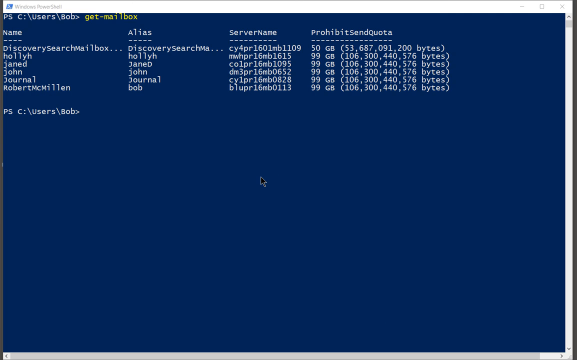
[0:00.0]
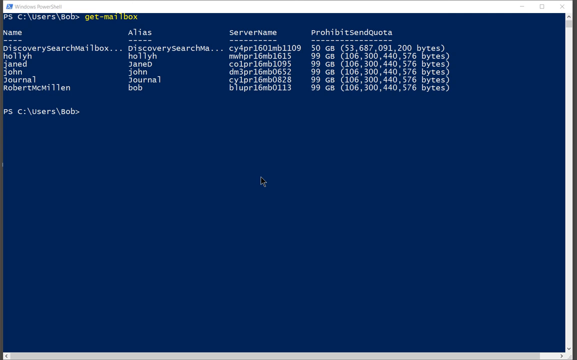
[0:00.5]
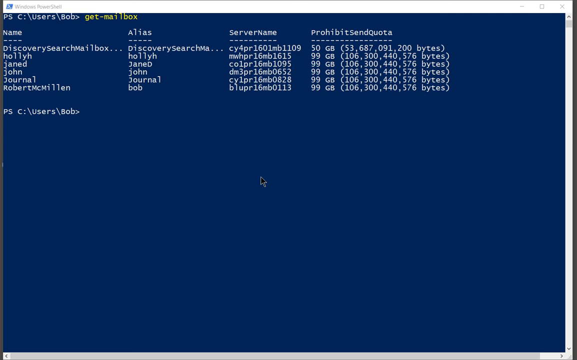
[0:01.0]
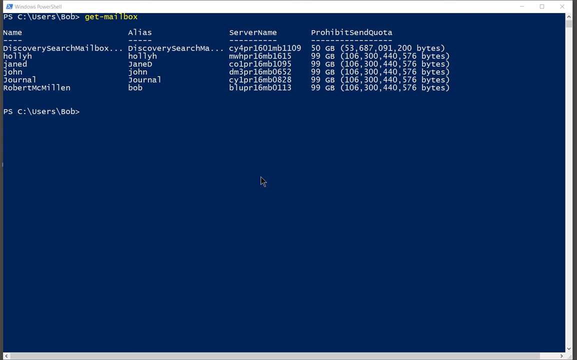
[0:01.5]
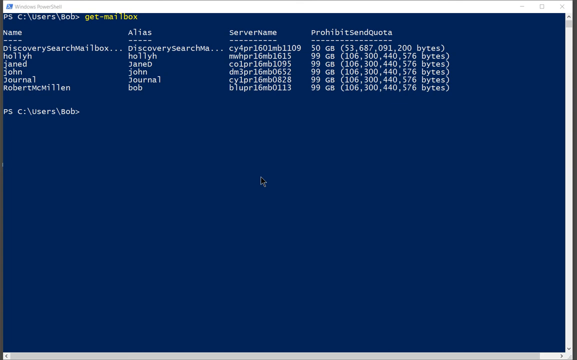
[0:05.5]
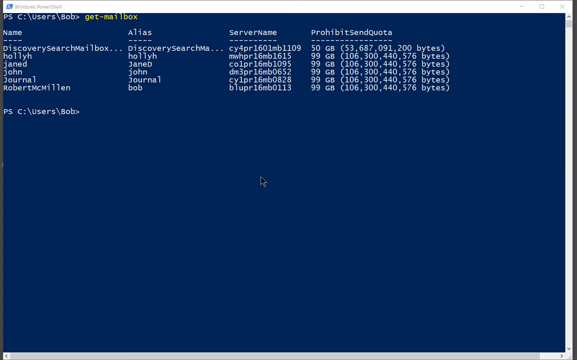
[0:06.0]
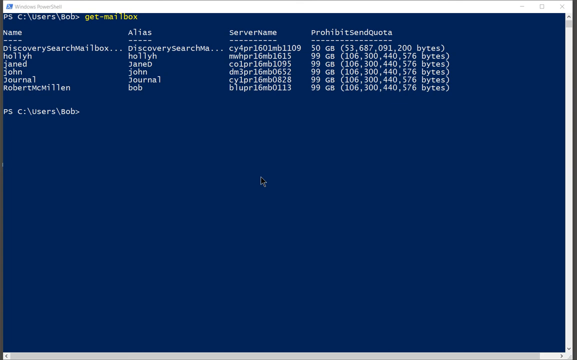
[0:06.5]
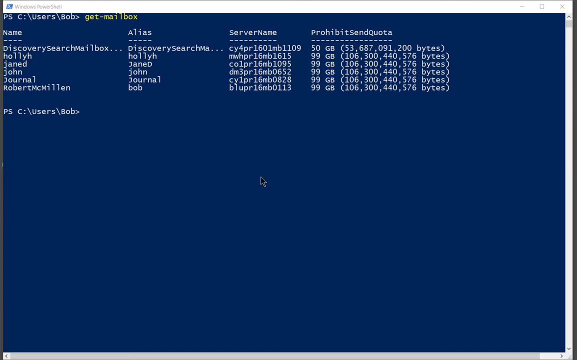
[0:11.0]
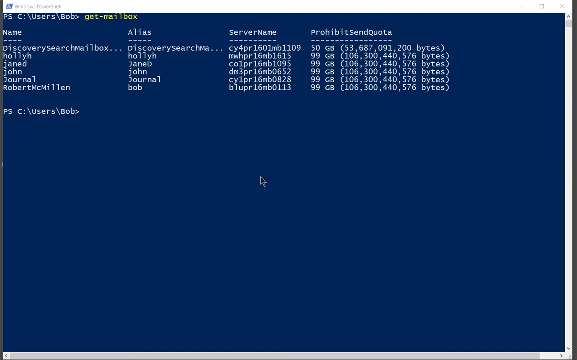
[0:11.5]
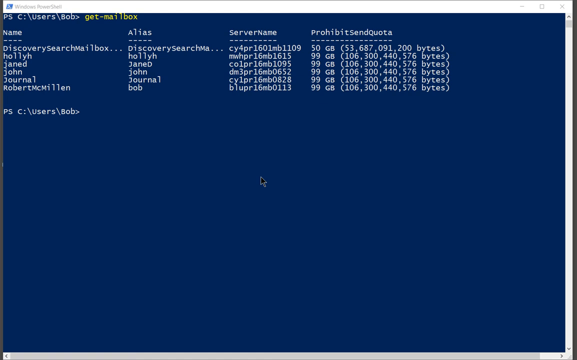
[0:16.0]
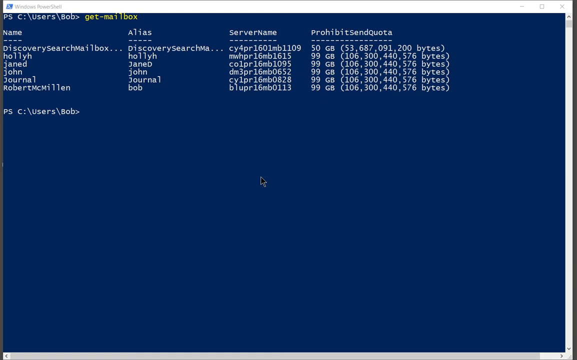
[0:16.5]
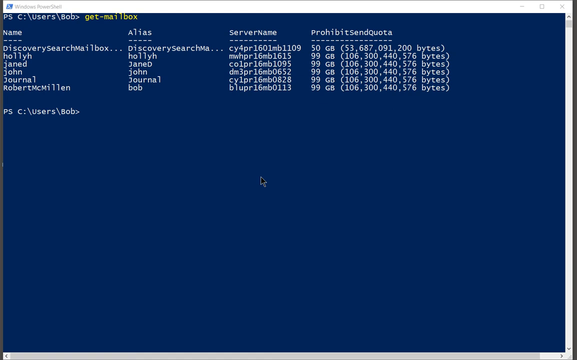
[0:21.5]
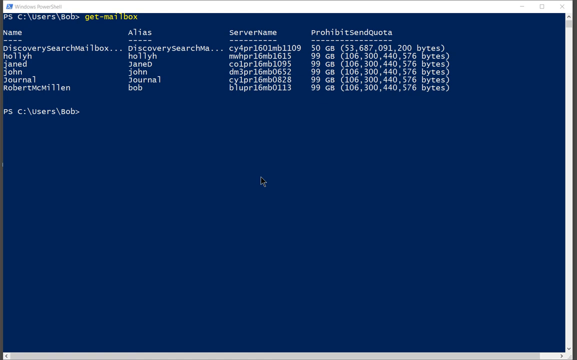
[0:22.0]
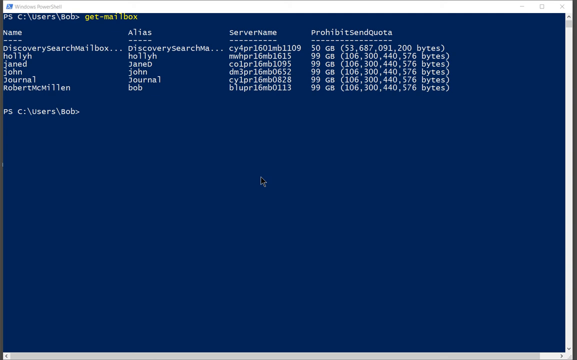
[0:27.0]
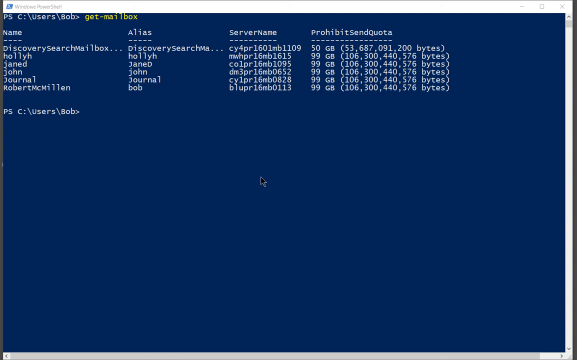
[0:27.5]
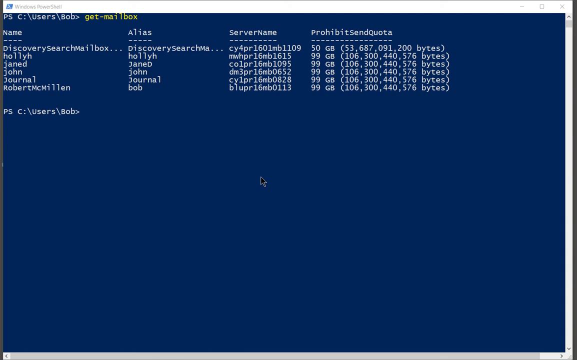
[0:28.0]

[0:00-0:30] Code is shown on screen, with numbers and bytes visible. The screen is blue and the text is written in white, with some parts highlighted in yellow.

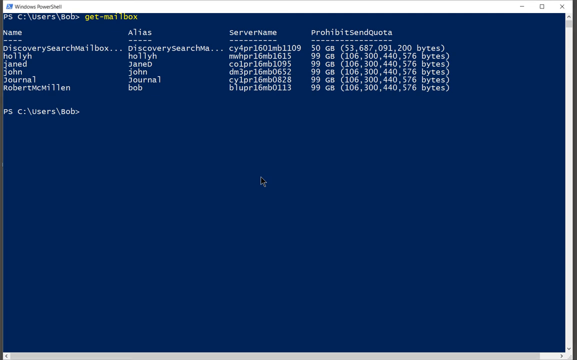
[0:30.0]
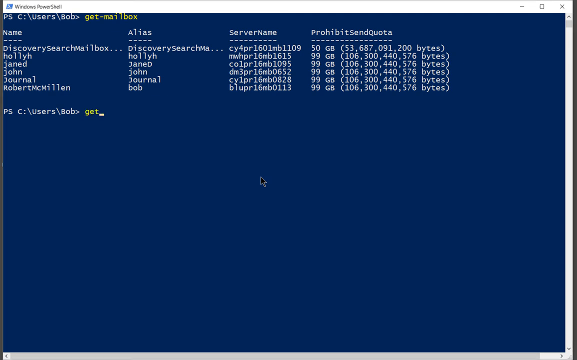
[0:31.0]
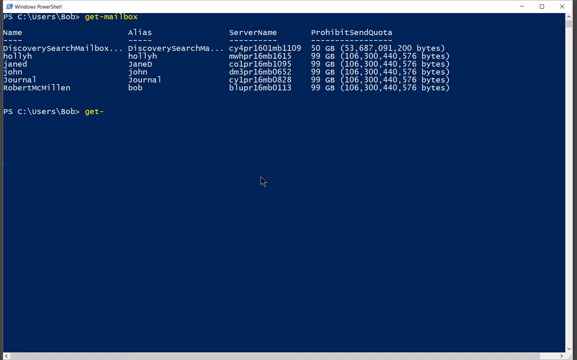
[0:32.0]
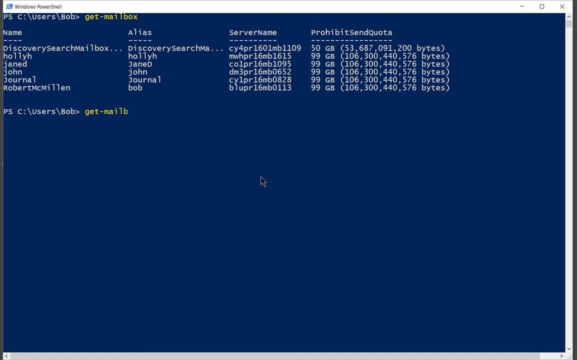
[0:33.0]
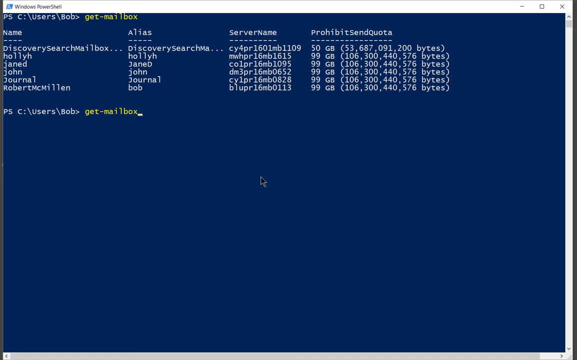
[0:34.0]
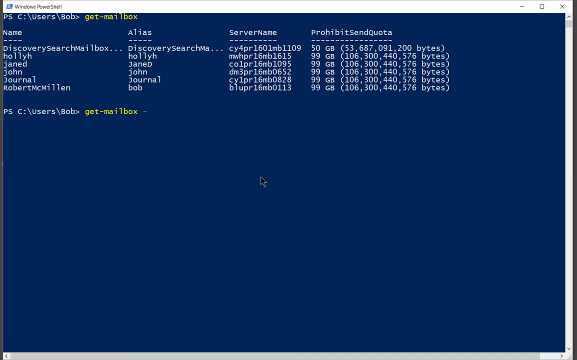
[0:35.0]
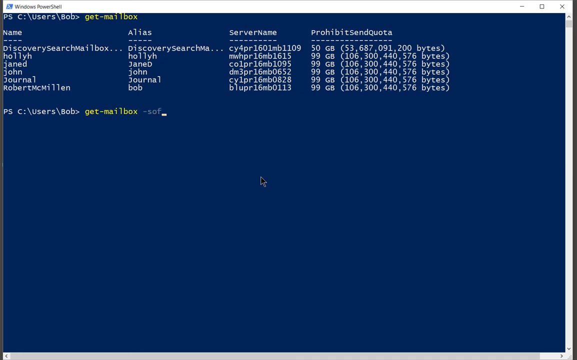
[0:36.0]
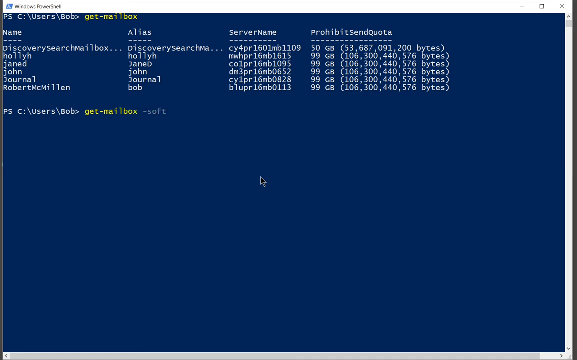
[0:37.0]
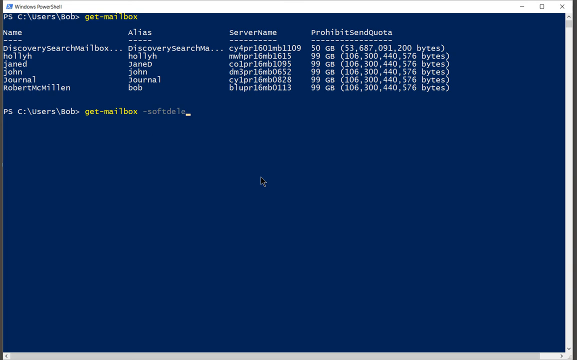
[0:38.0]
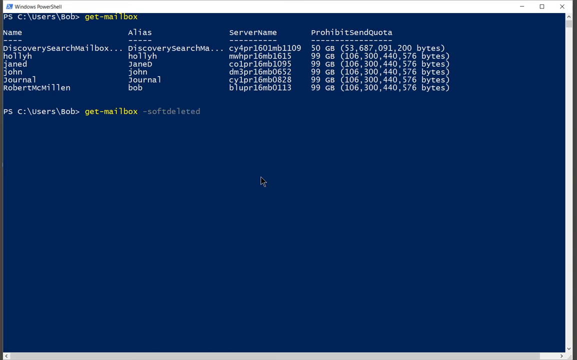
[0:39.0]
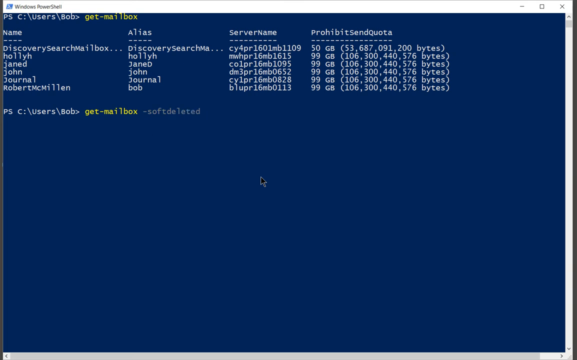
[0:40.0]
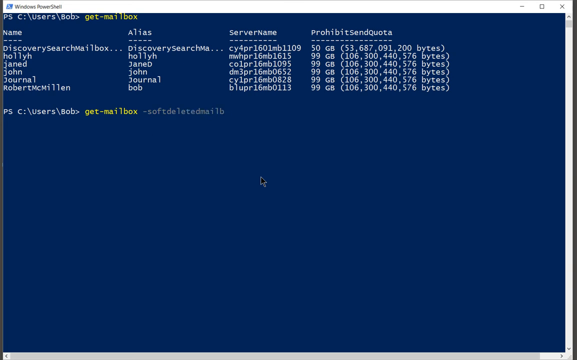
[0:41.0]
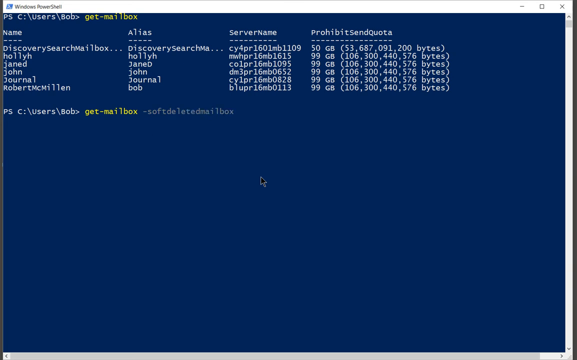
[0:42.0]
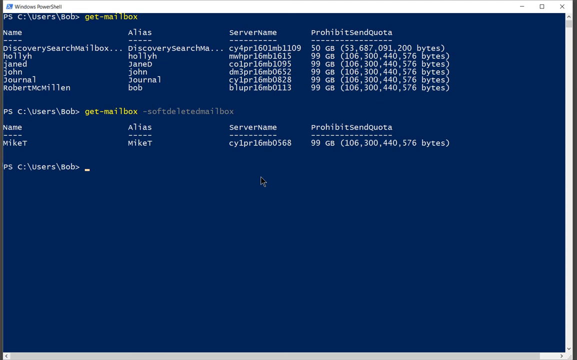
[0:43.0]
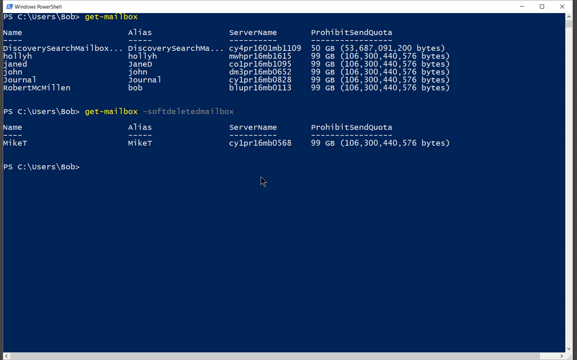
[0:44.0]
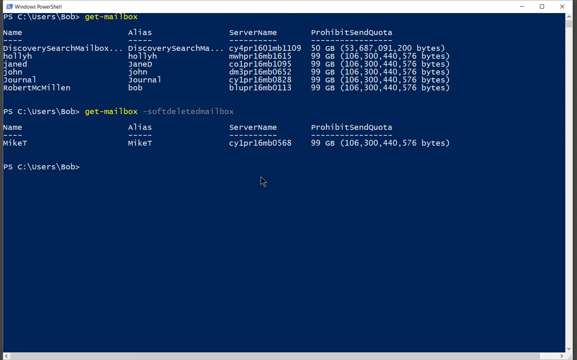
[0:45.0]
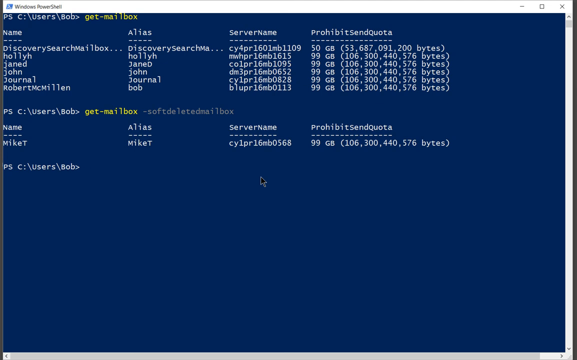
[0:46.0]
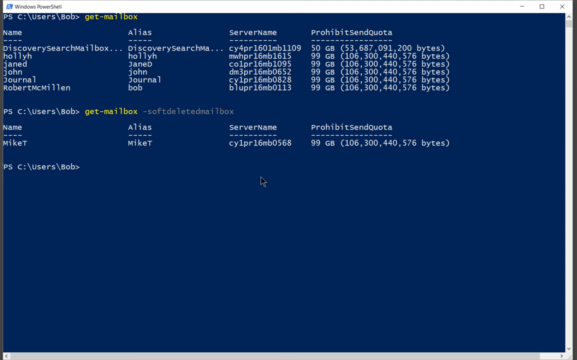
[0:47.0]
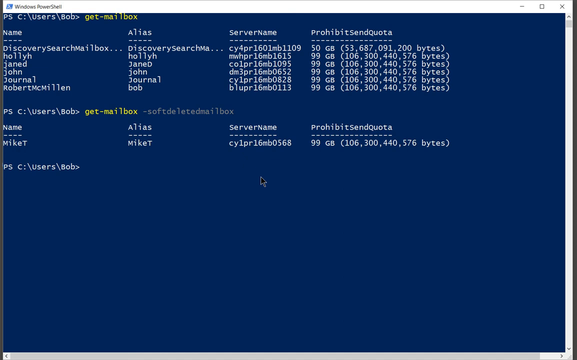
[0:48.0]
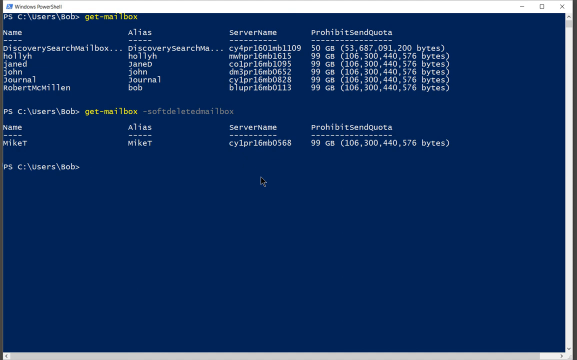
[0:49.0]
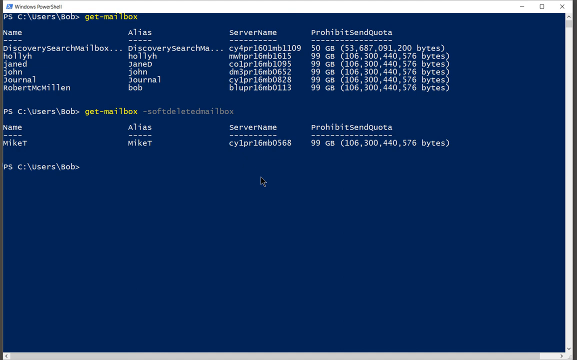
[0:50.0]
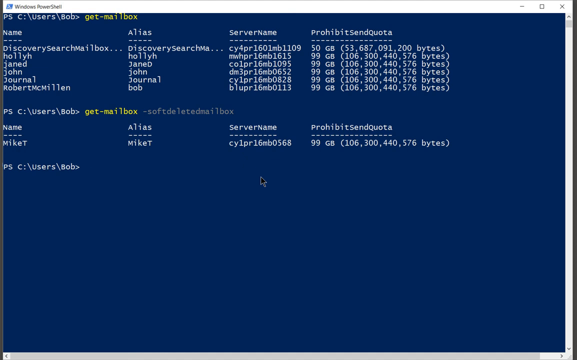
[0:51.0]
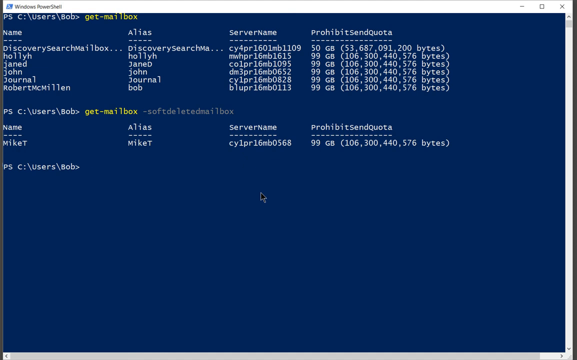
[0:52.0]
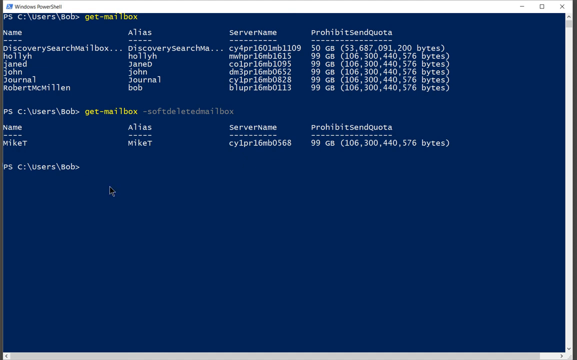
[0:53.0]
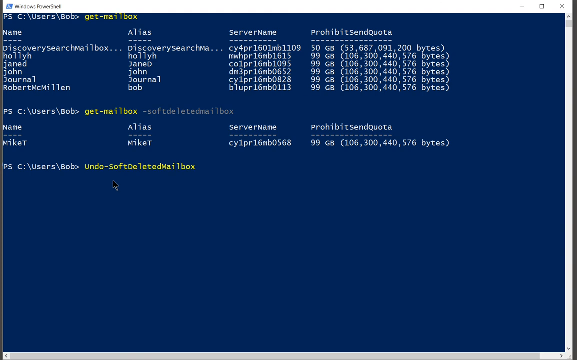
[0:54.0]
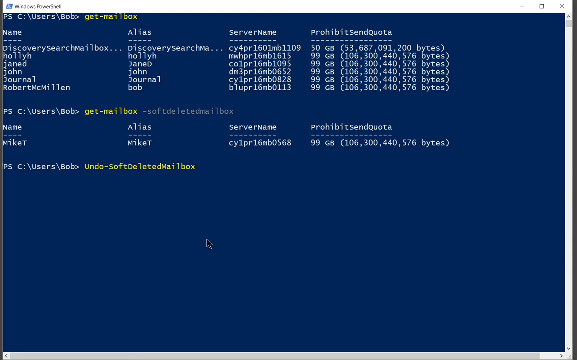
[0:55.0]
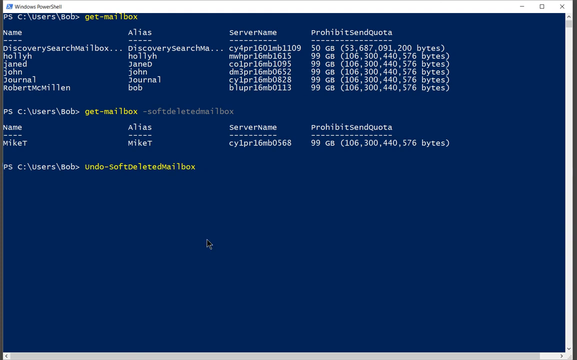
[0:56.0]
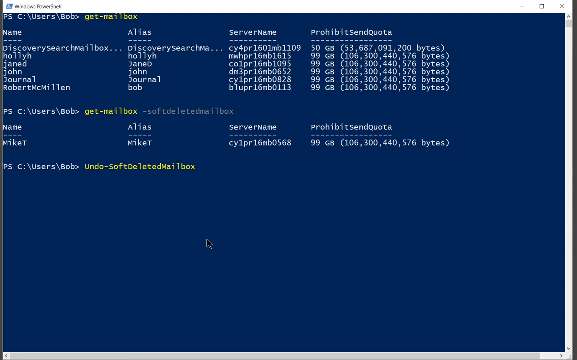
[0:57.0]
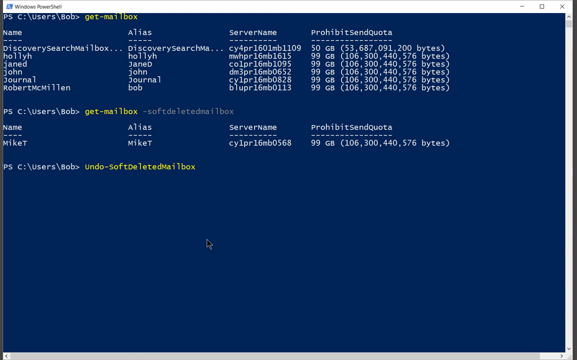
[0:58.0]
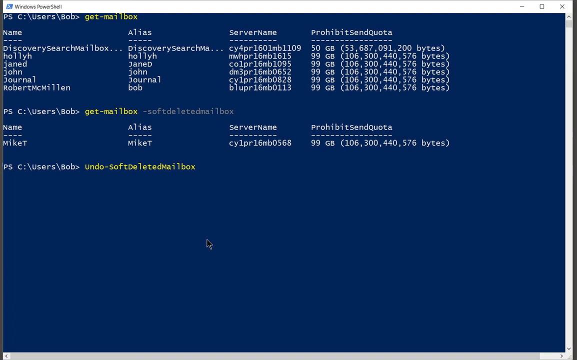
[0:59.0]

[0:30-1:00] More code appears as things are added to it. The text includes "server" and "prohibit", along with numbers and some names, including "John" and "journal". The background is plain blue.